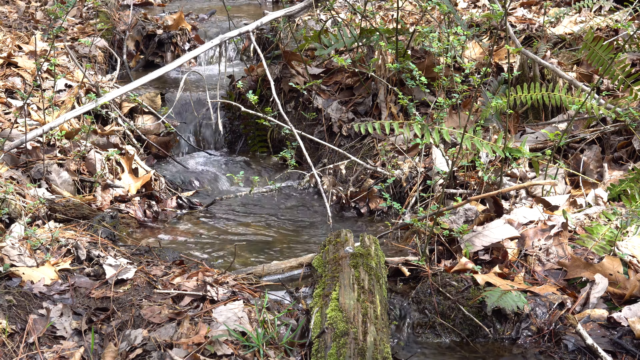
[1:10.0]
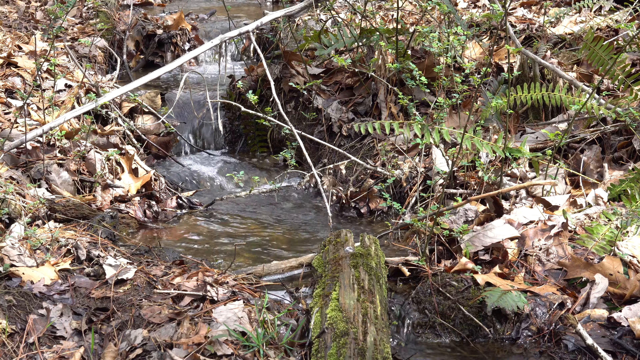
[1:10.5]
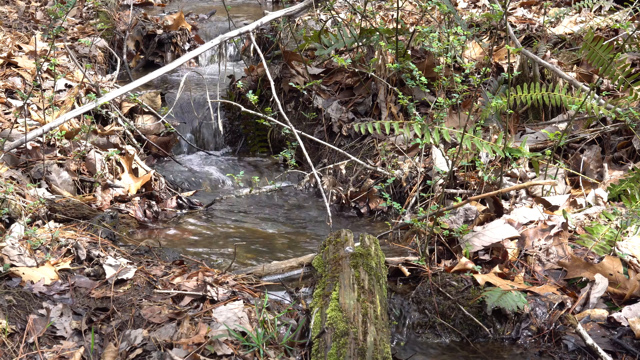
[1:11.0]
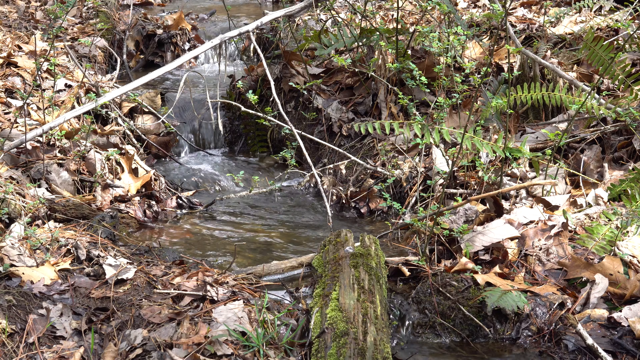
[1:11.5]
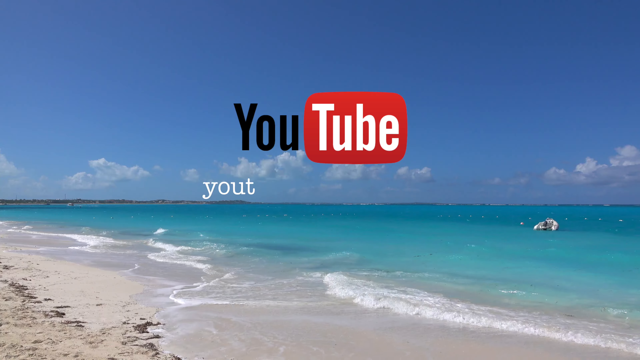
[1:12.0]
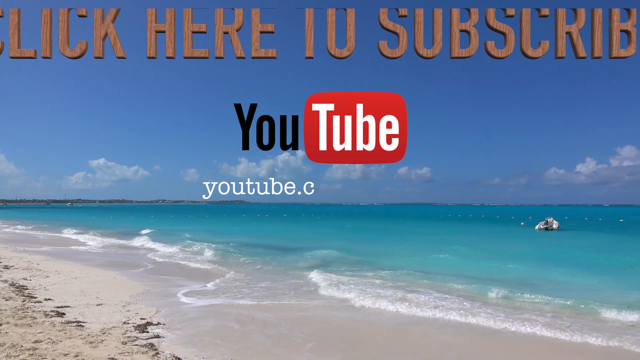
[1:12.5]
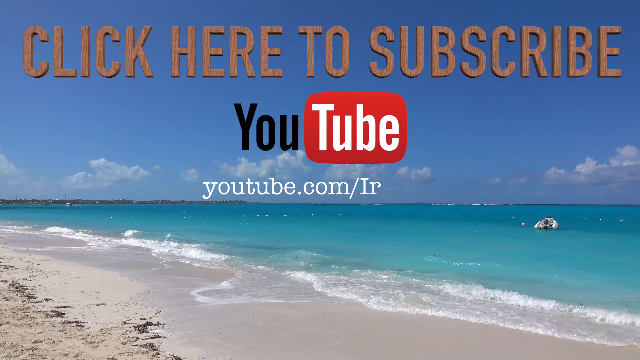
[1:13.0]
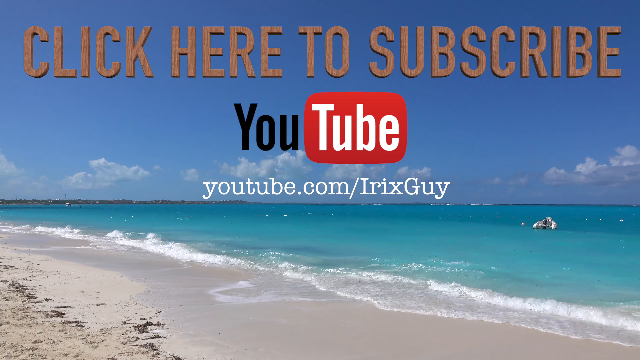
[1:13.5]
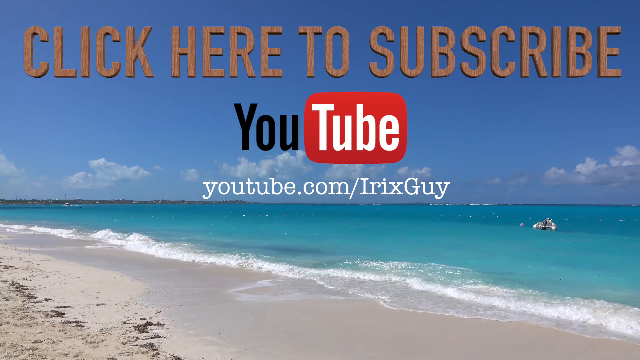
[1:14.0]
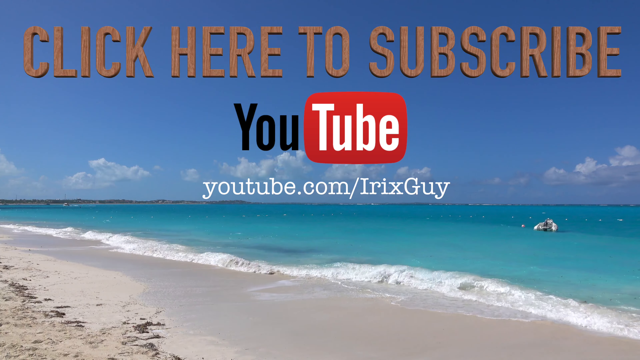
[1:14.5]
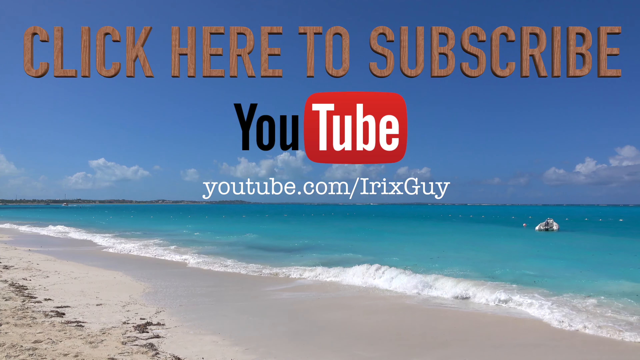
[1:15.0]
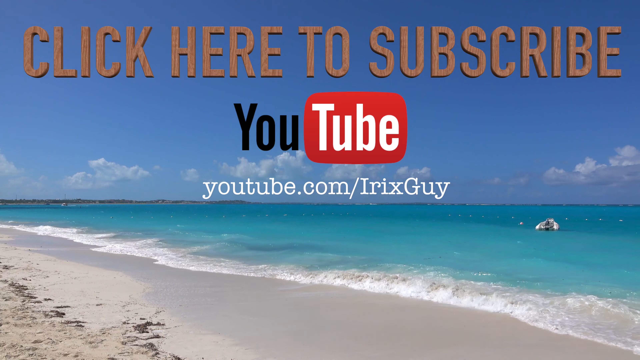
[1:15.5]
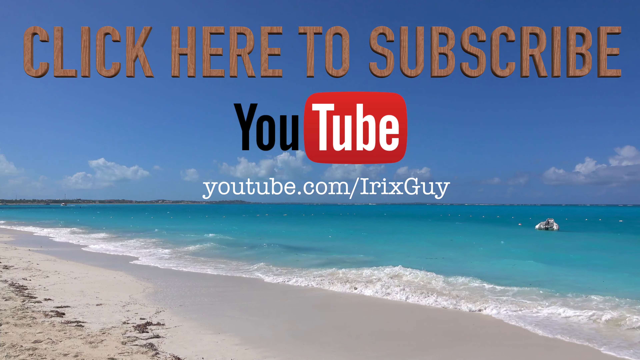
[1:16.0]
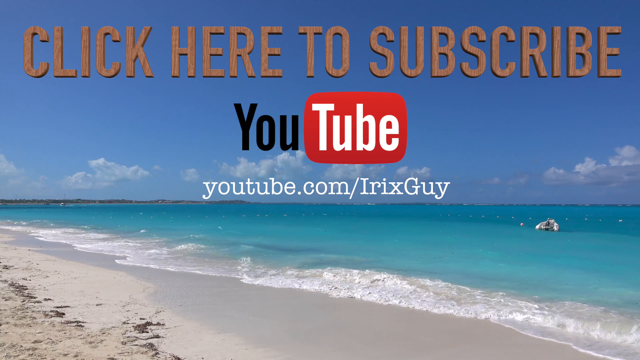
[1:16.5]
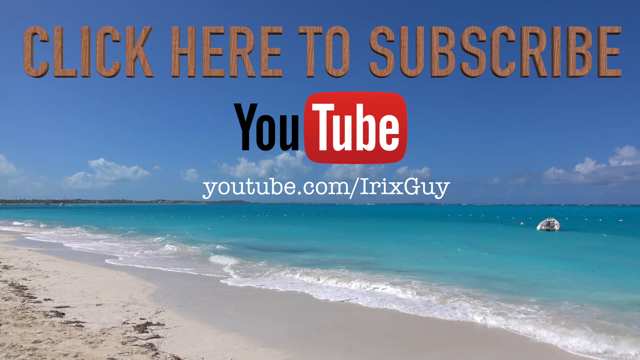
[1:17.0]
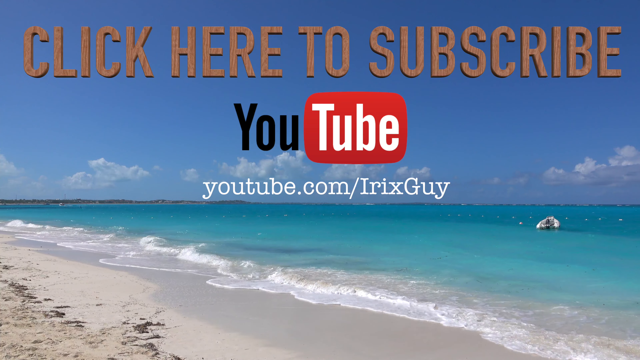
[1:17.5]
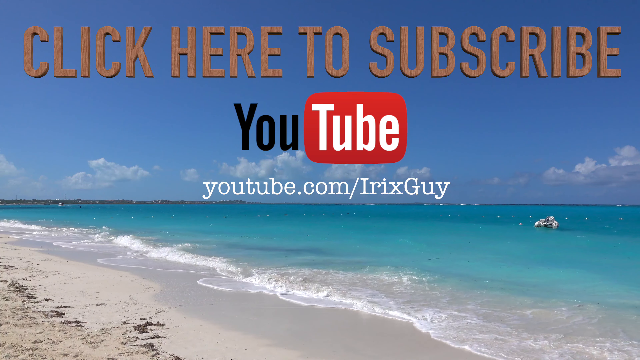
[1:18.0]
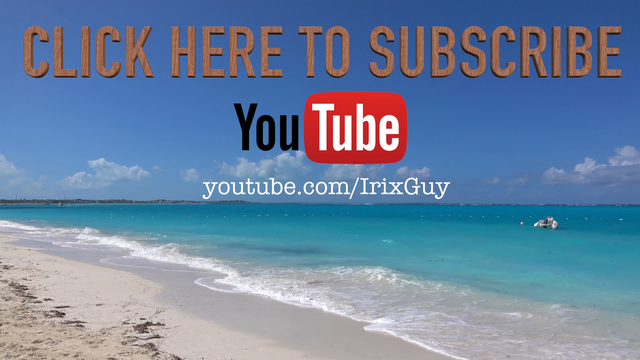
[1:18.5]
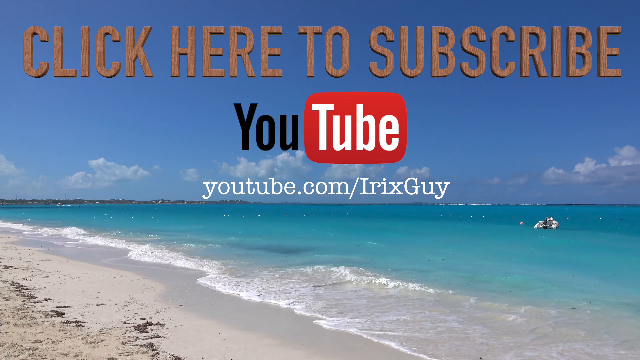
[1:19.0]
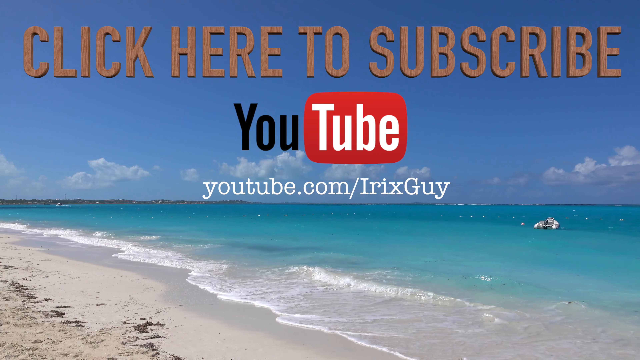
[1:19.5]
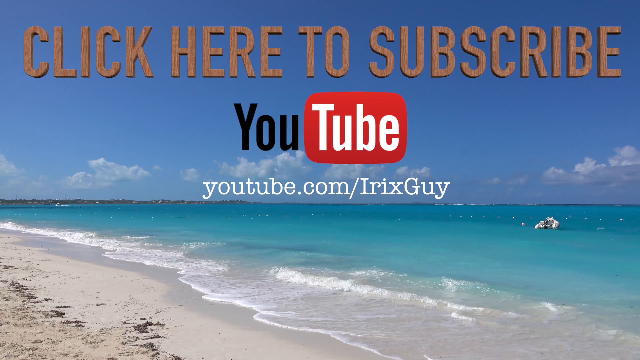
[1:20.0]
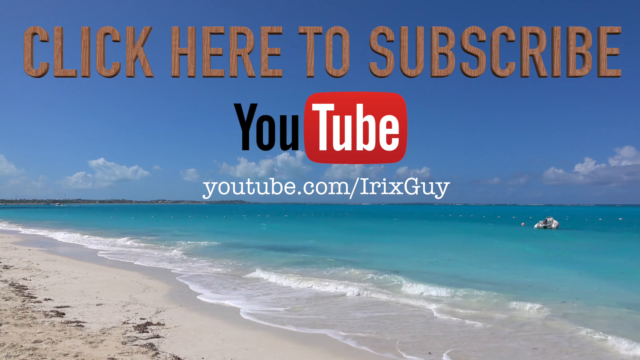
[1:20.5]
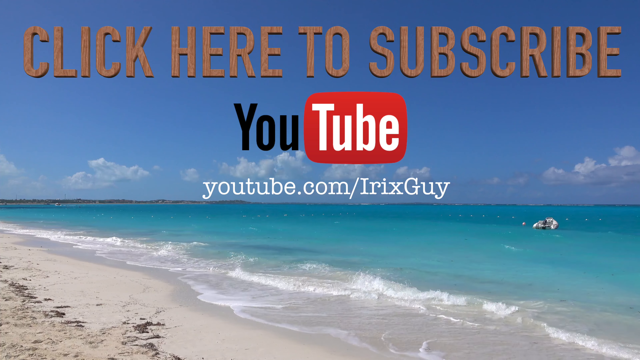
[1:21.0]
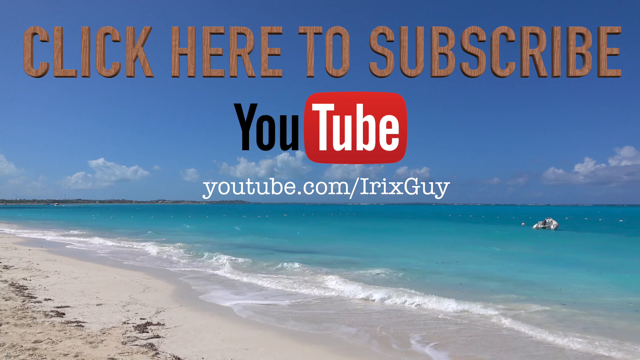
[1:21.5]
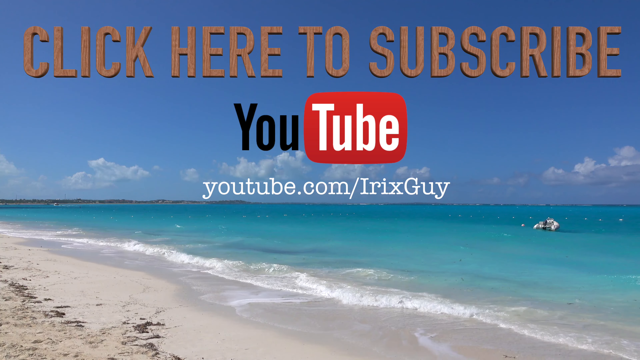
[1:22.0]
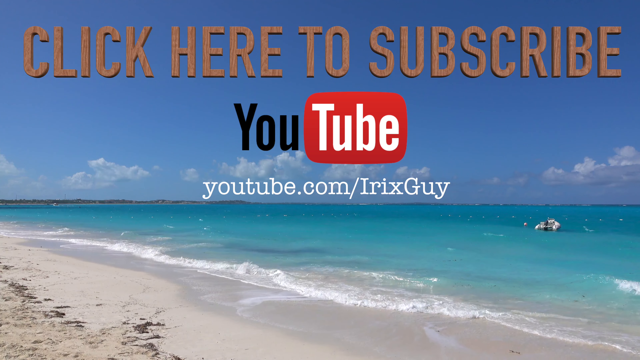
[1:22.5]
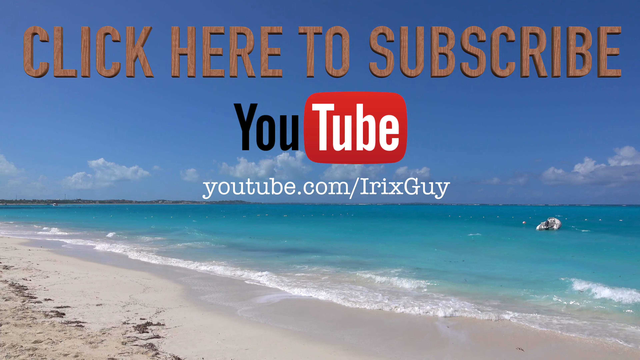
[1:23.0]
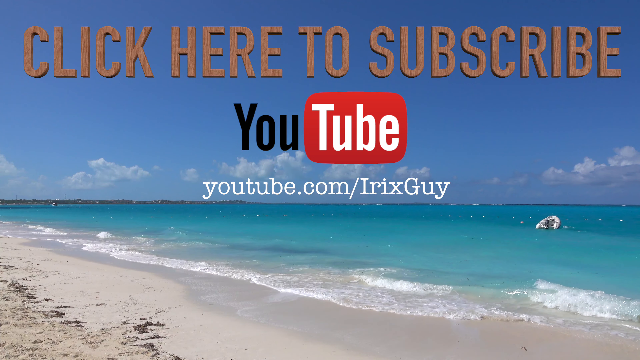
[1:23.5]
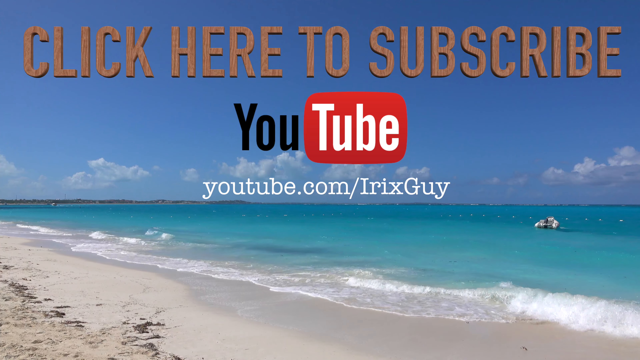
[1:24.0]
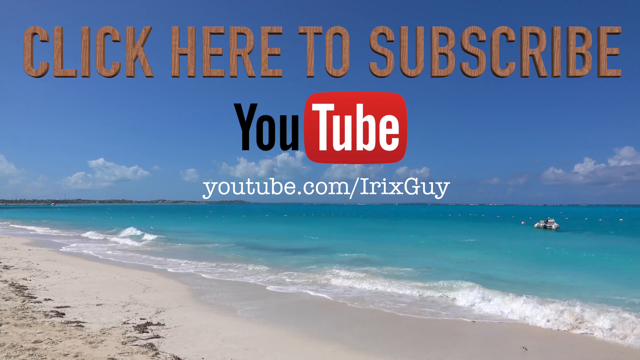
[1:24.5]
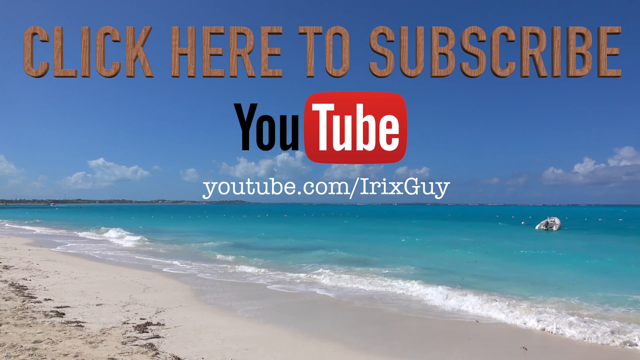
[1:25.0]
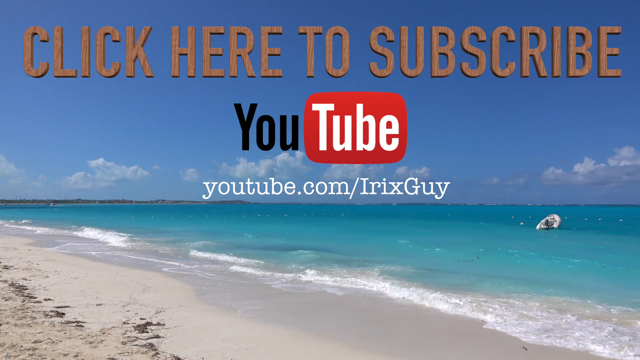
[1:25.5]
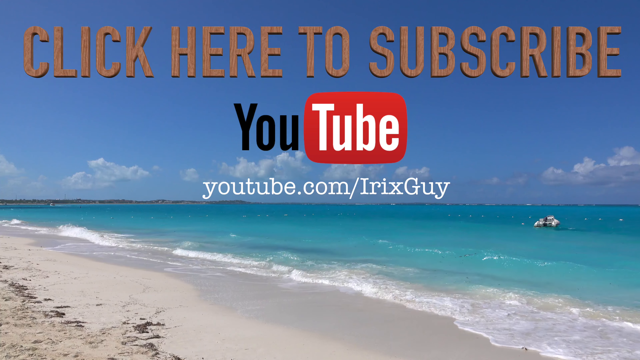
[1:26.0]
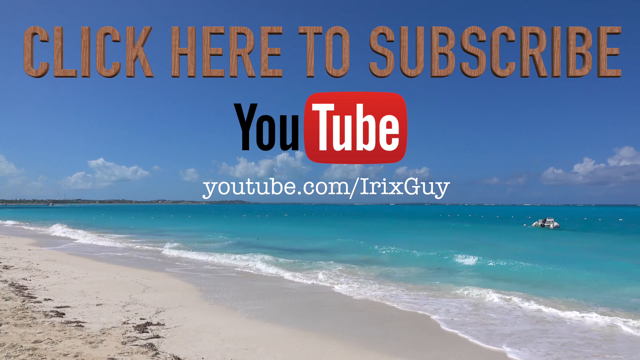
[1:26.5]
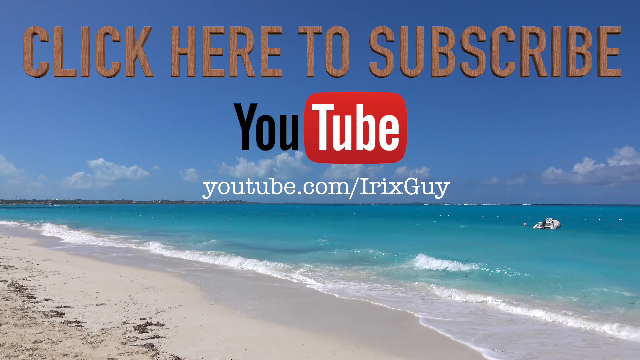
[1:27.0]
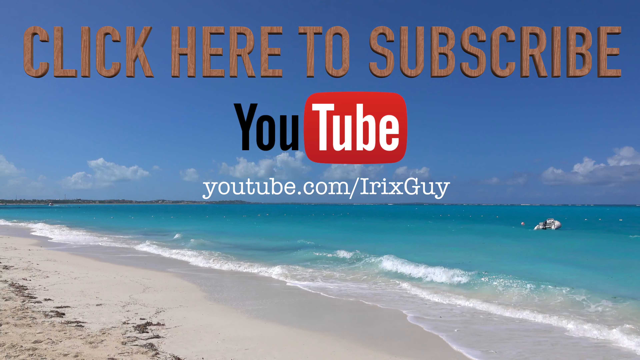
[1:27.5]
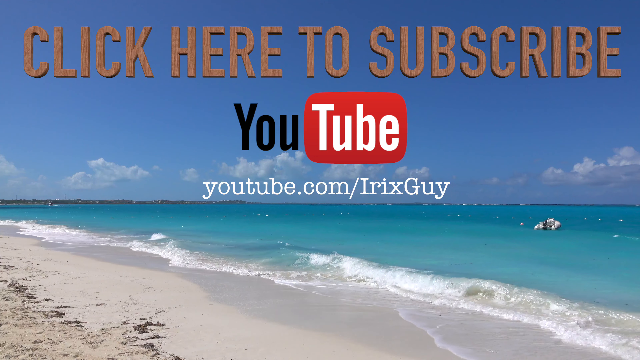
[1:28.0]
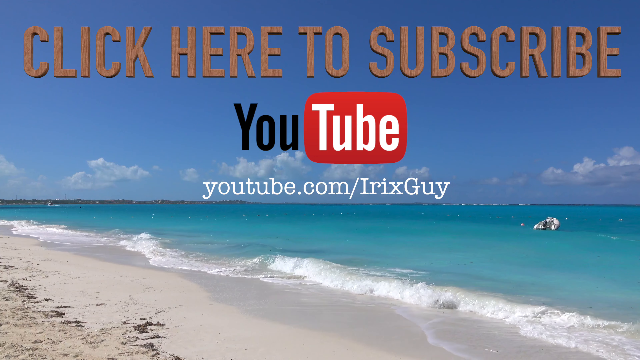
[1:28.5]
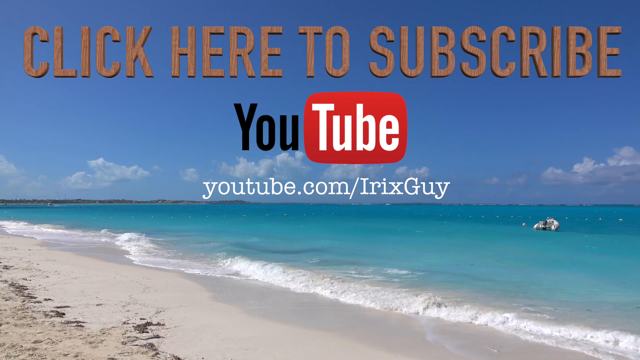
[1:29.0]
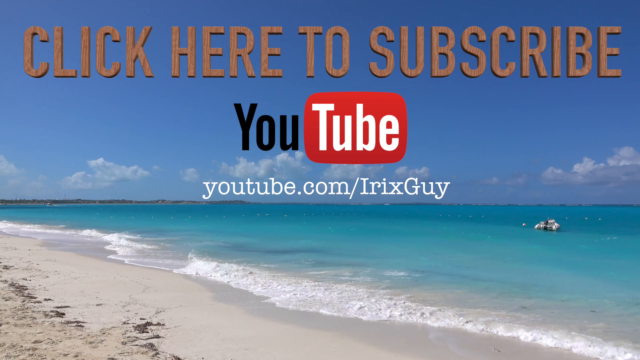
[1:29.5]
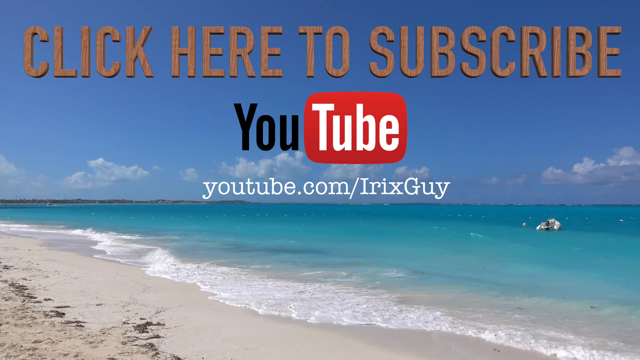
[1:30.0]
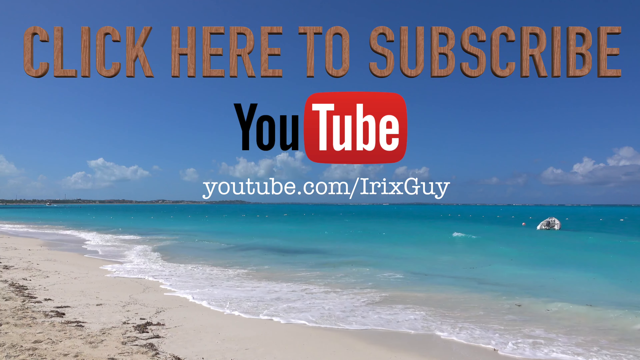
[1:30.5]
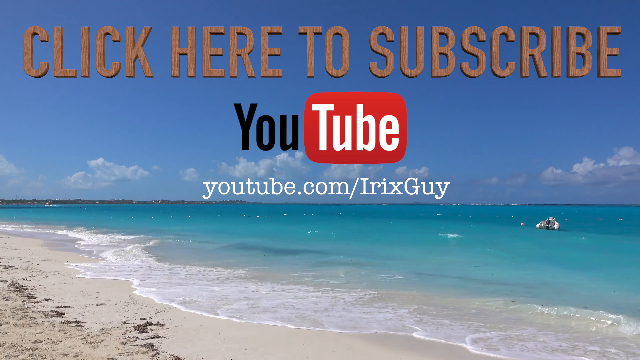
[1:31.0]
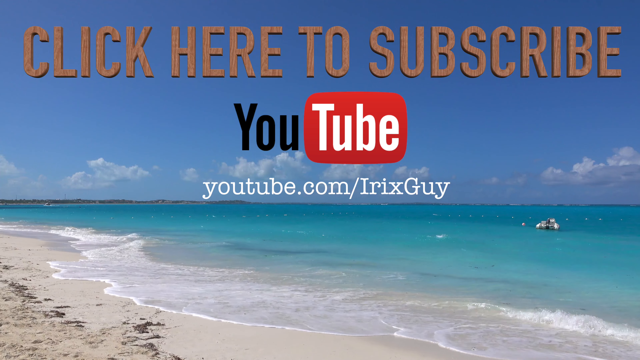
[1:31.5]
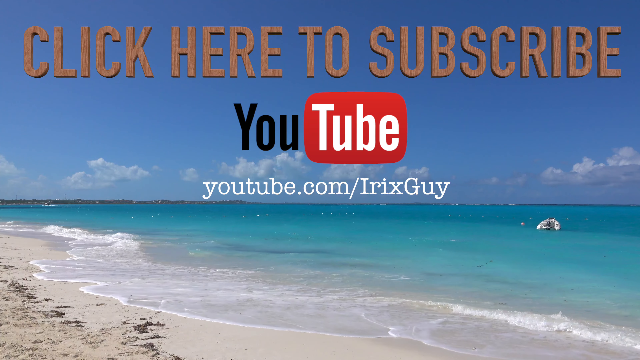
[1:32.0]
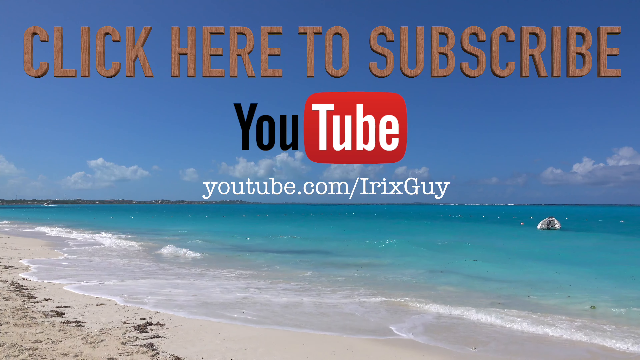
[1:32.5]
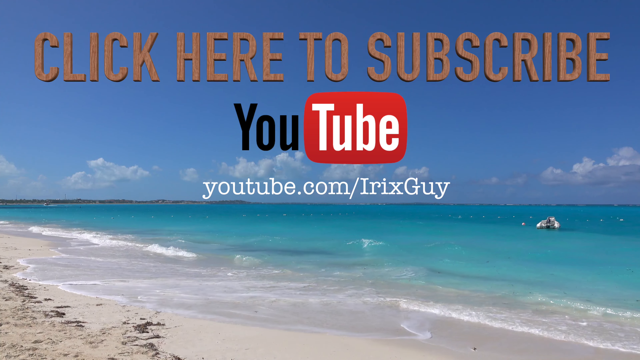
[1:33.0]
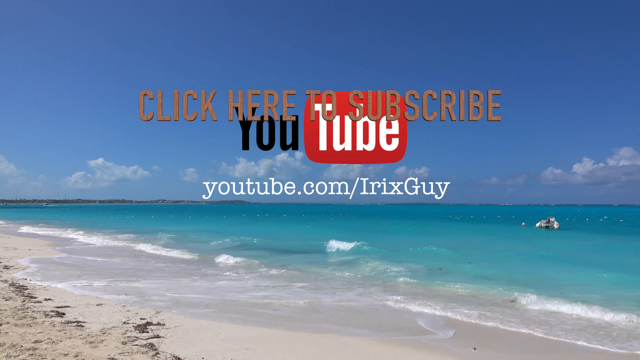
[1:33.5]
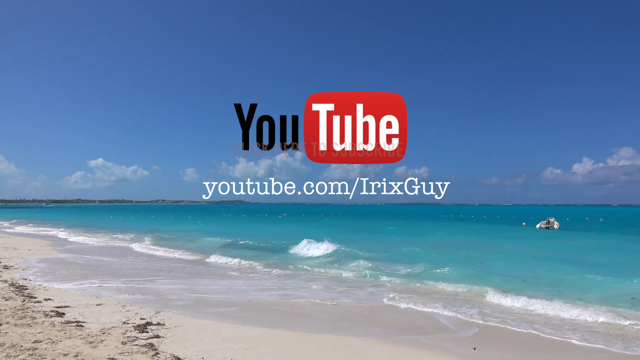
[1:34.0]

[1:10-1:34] The waterfall scene continues, then switches to a beach with clear blue water on the right side and a clear sky with a few clouds. Text in bold all-caps letters reads "click here to subscribe", along with "YouTube" in the YouTube logo. Text, apparently in white, reads "youtube.com/IRIX guy". Water waves are visible, a small boat is on the right-hand side, and a wave splashes up against the sand.